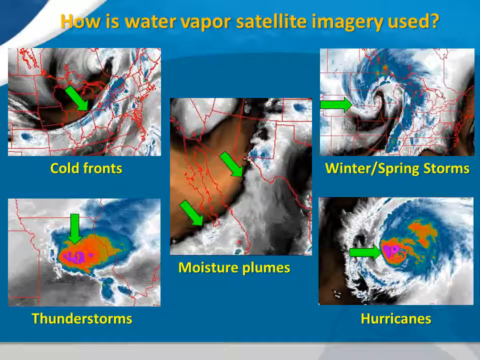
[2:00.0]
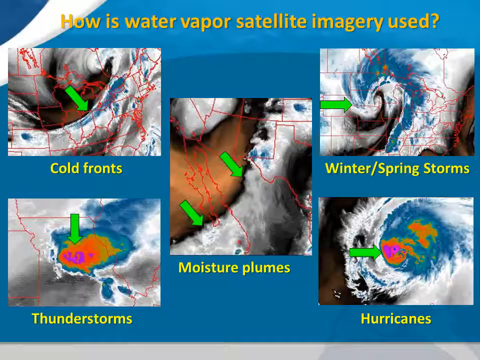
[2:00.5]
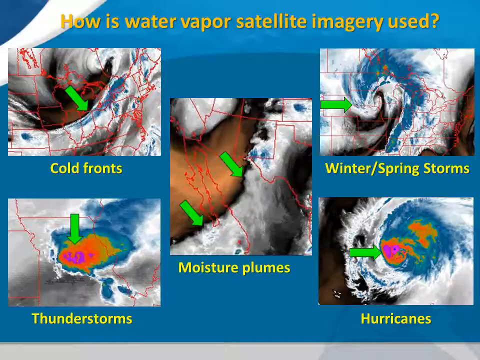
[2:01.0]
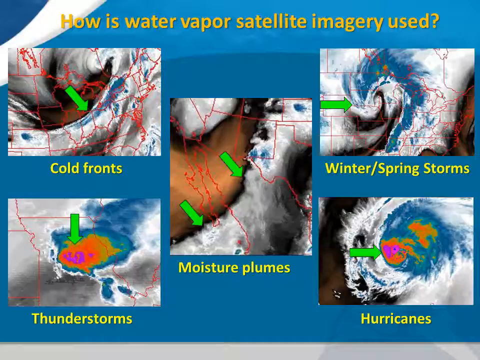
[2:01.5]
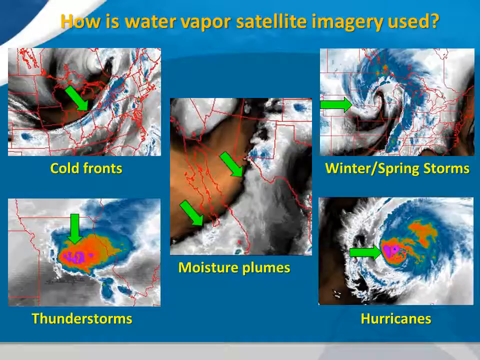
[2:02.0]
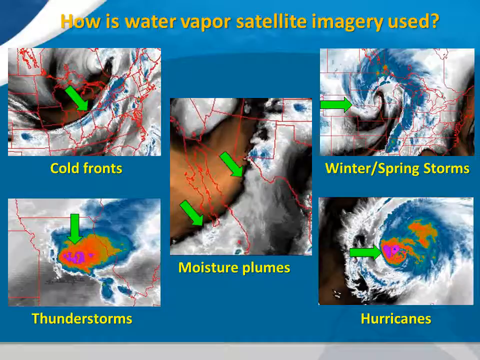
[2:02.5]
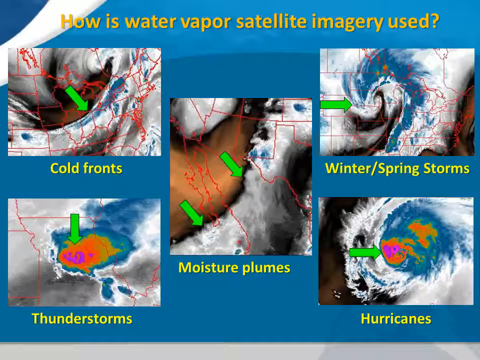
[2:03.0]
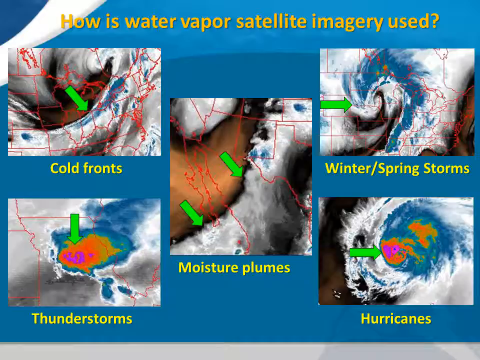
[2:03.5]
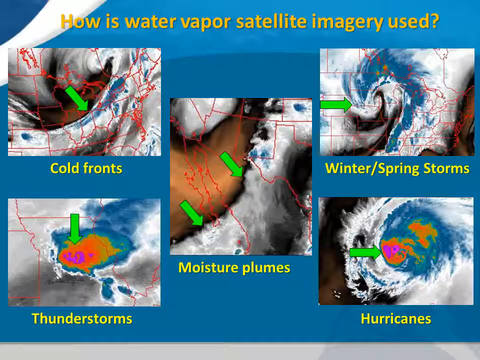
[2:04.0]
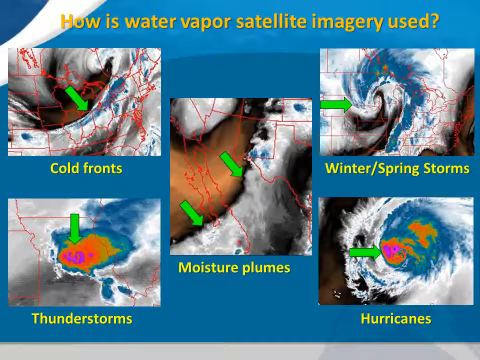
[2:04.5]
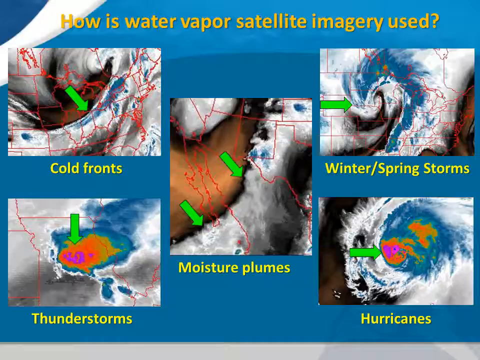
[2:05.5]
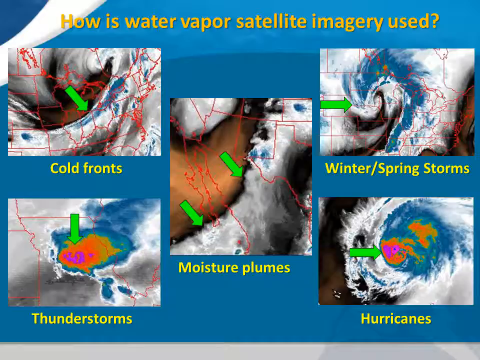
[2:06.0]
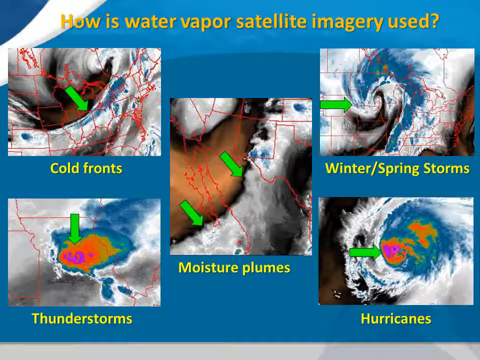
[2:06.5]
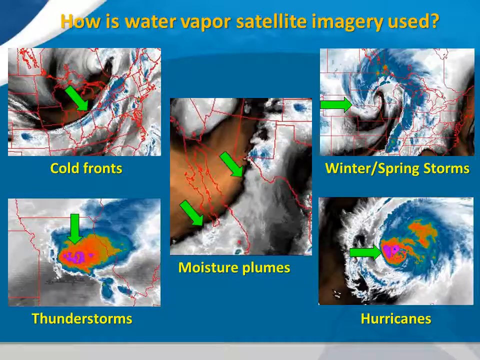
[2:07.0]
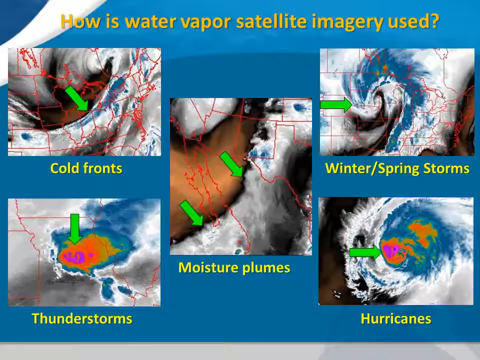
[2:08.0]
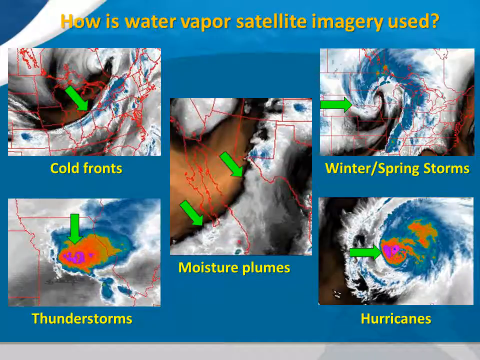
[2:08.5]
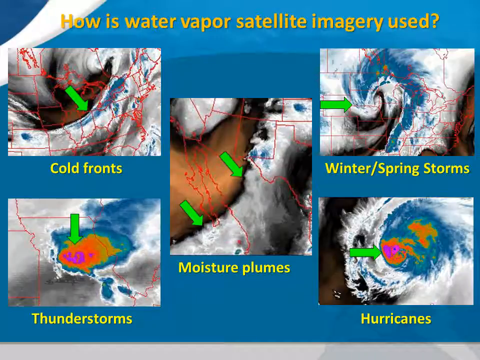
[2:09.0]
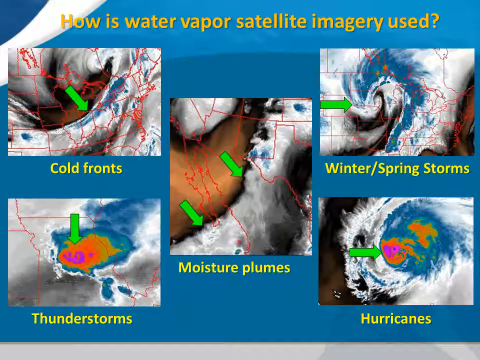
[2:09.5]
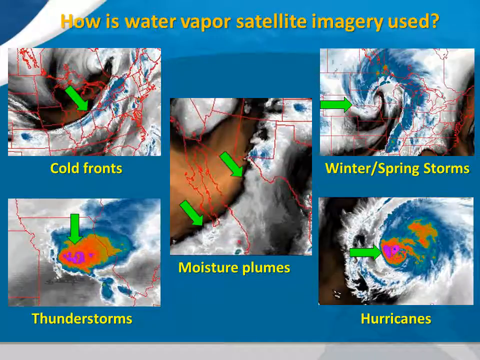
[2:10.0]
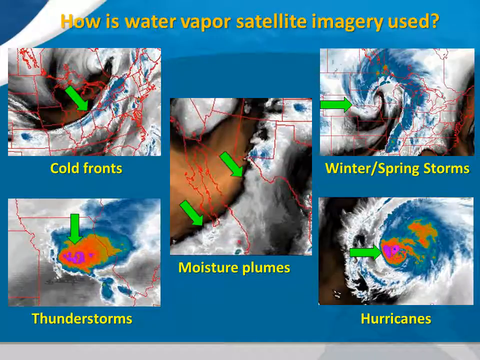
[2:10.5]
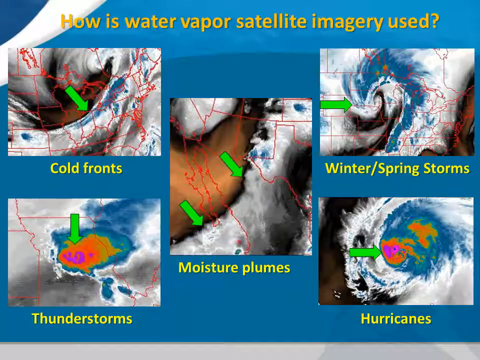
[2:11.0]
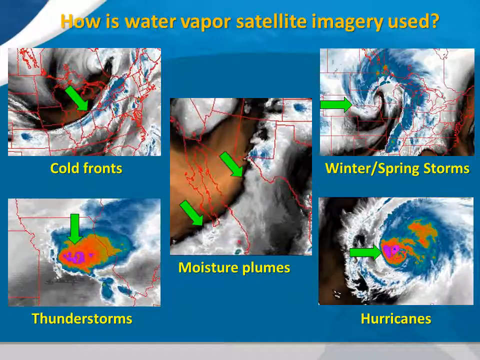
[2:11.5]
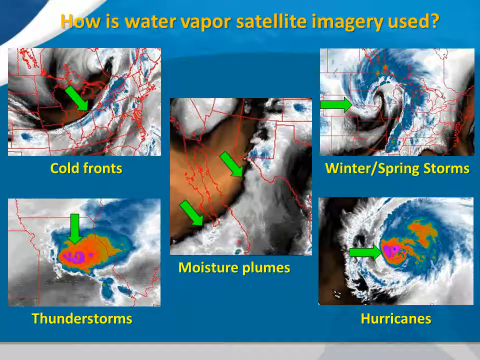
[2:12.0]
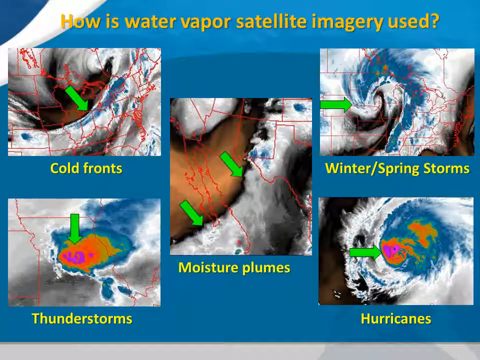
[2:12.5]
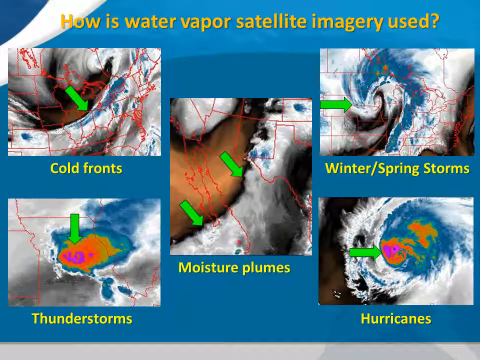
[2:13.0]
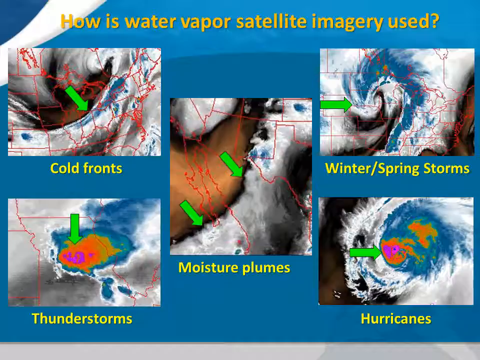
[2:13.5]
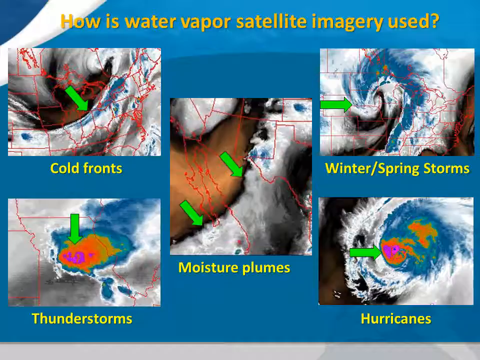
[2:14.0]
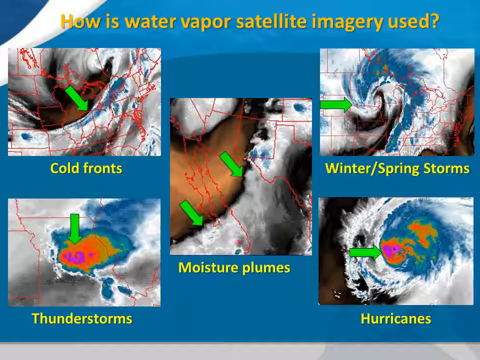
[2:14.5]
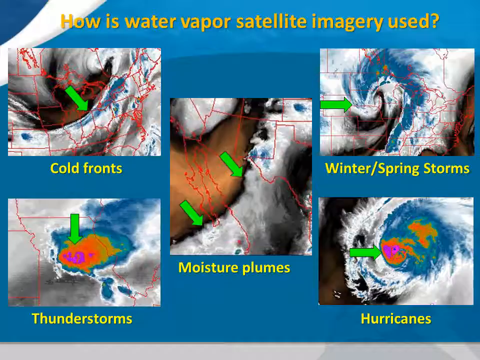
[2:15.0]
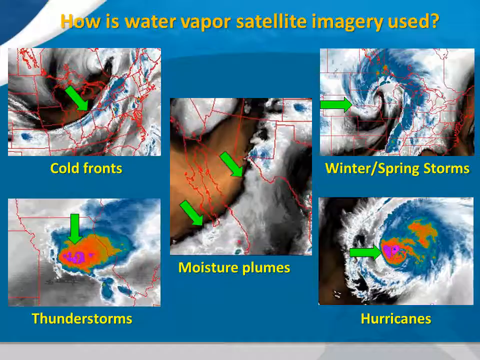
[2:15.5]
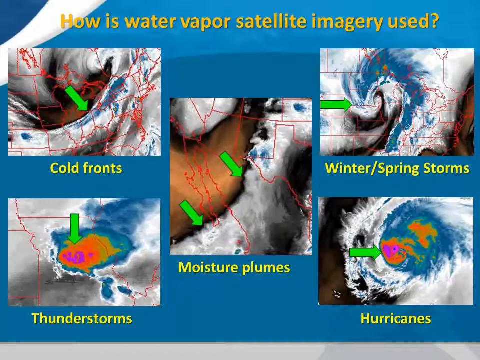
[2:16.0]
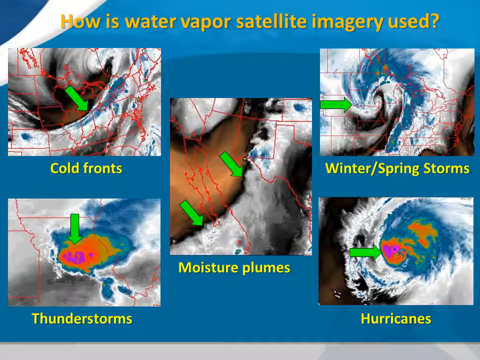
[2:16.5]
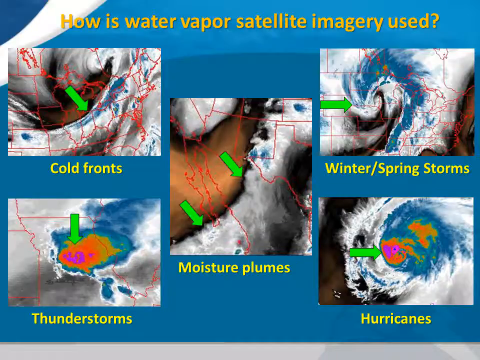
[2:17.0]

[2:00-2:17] Five images are superimposed over a light blue background, with yellow text at the top of the screen reading "how is water vapor satellite imagery used?" The top left image shows the northeastern United States with a green arrow pointing southeast in the center and some of the northeastern states outlined in red. Below it, yellow text reads "cold fronts." The image shows white and blue cloud imagery, along with some brown that might be smoke or dust, or maybe just the land underneath. The bottom left image, below it, shows what appears to possibly be Iowa, though it is hard to tell because the whole state is not visible; dark blue, light blue, green, yellow, orange, red, and purple cloud imagery covers the state. Below the image, yellow text reads "thunderstorms."